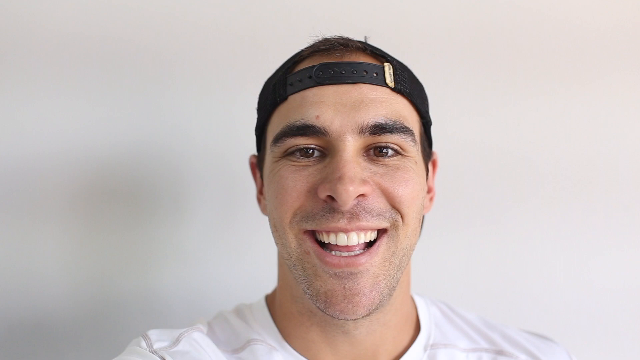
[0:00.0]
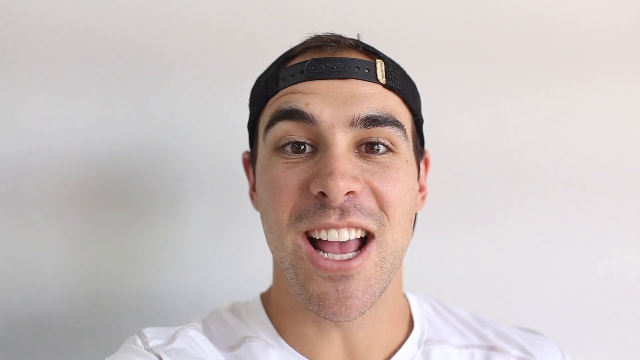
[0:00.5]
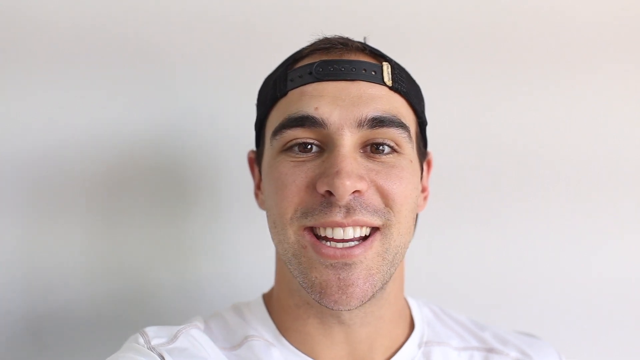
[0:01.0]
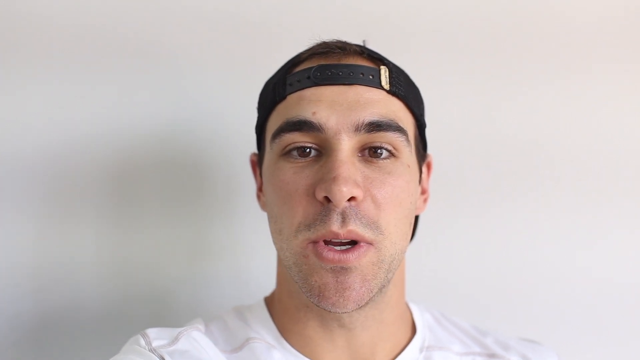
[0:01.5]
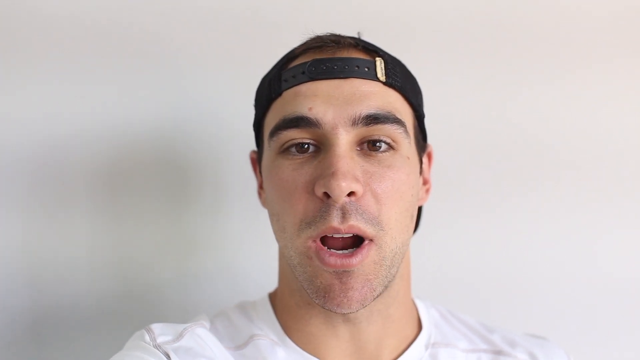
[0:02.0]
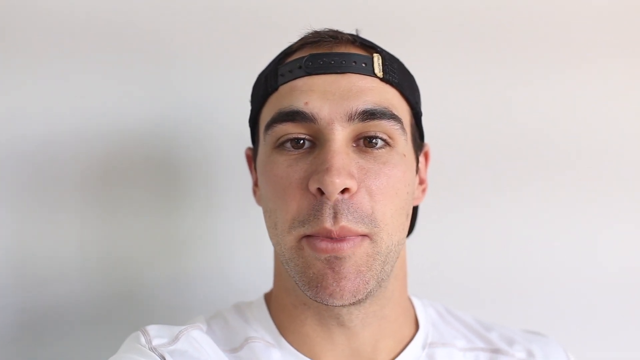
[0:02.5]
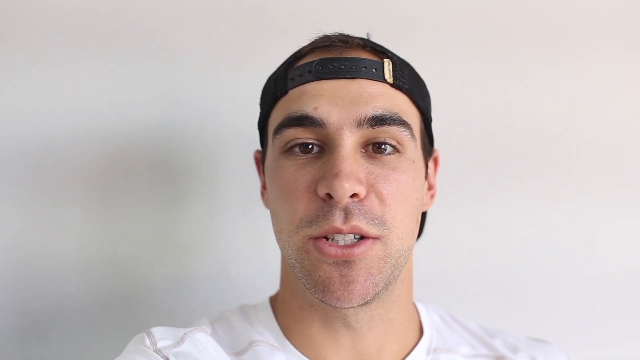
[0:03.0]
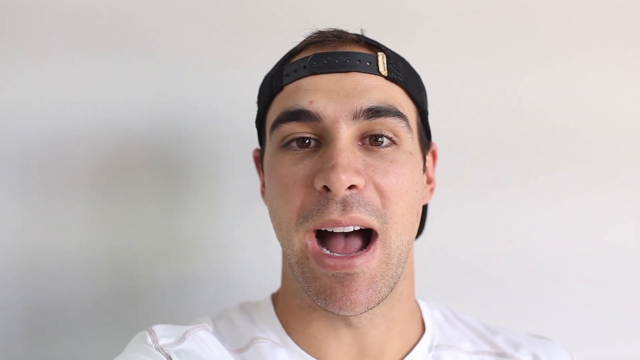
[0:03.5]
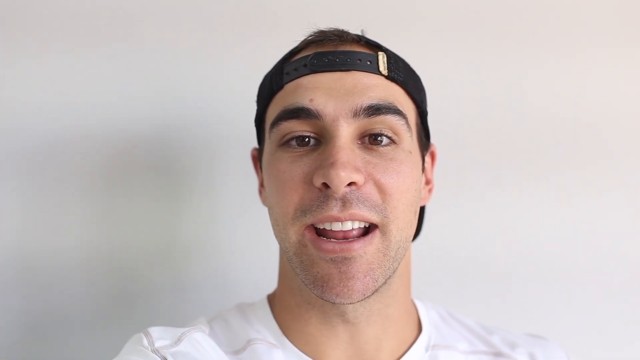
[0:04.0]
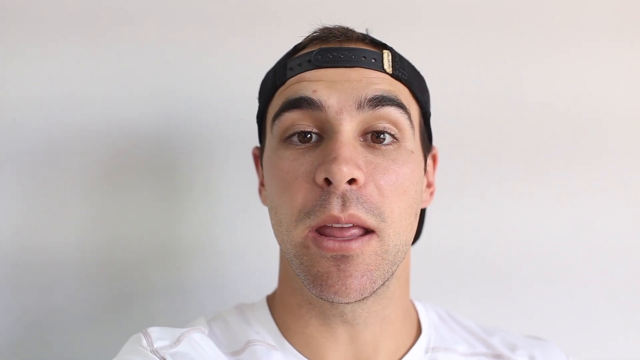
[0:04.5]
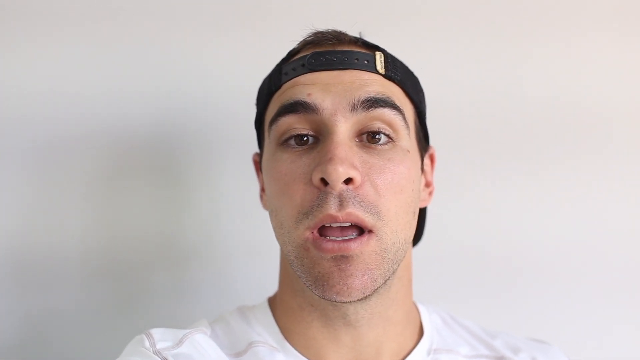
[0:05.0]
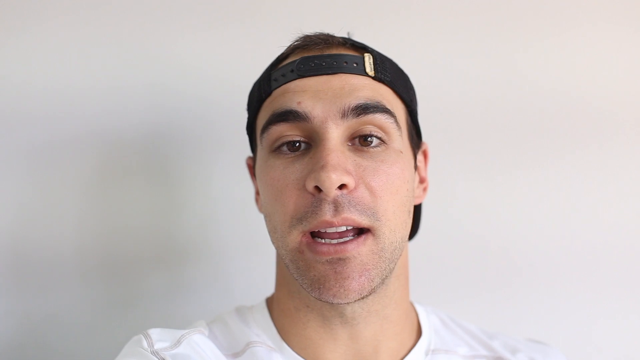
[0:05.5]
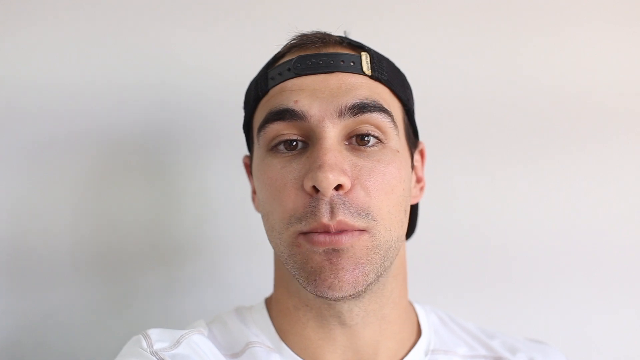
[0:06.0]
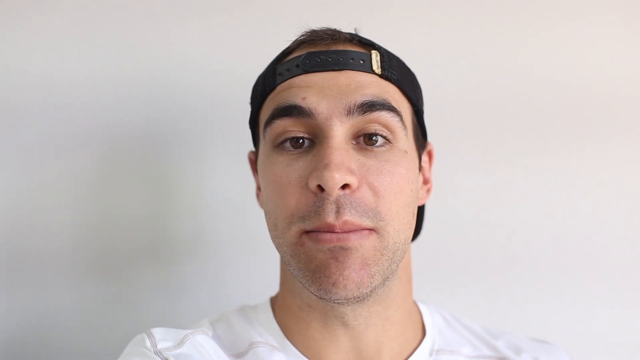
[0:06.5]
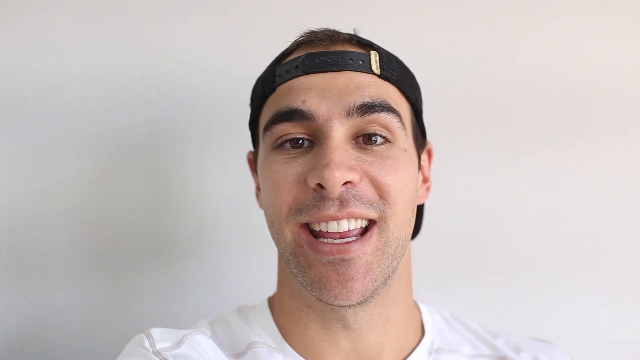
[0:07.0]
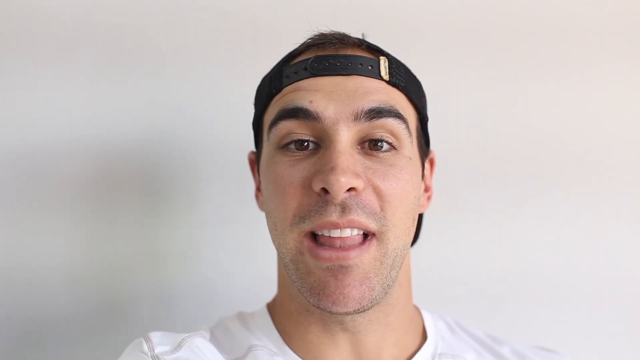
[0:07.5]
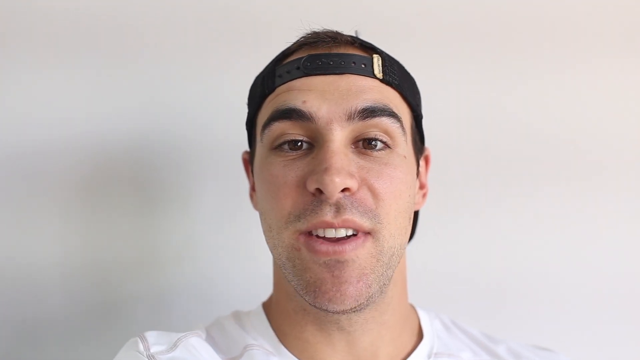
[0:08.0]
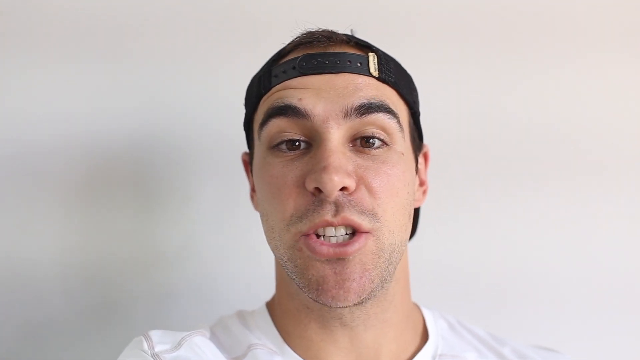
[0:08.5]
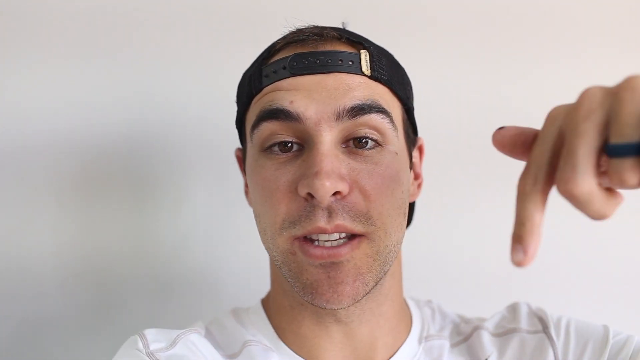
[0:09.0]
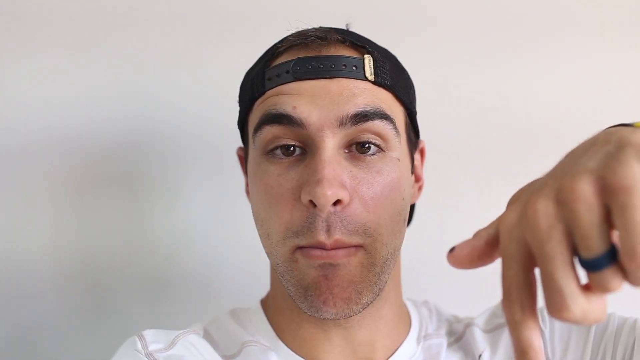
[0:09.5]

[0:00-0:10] A man appears against a plain white background in a selfie-style headshot, with the shoulders of his white t-shirt barely visible. He wears a black cap backwards on his head, has tan olive skin, dark eyes and some stubble on his beard. Positioned in the centre of the screen, he talks towards the camera, his mouth moving at quite a fast pace. He then brings his left hand into view and points his index finger downwards towards the floor.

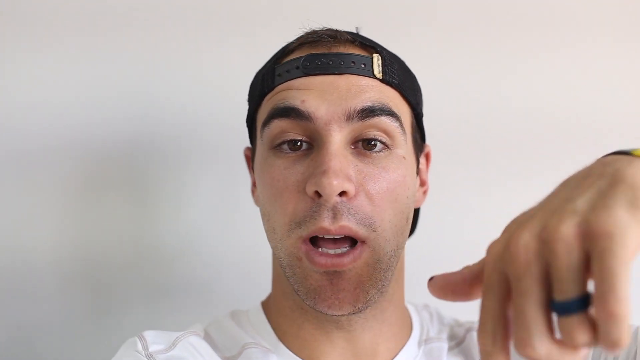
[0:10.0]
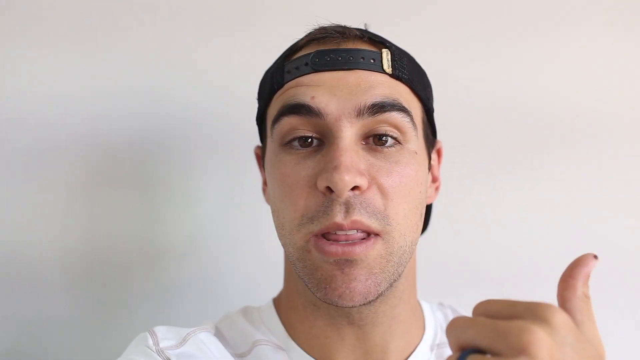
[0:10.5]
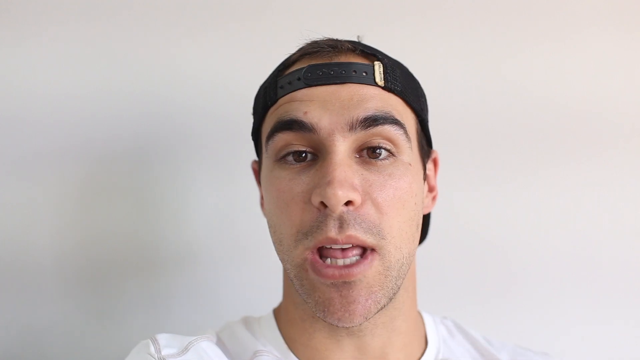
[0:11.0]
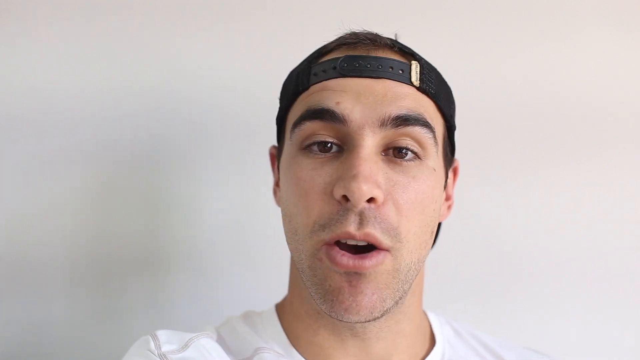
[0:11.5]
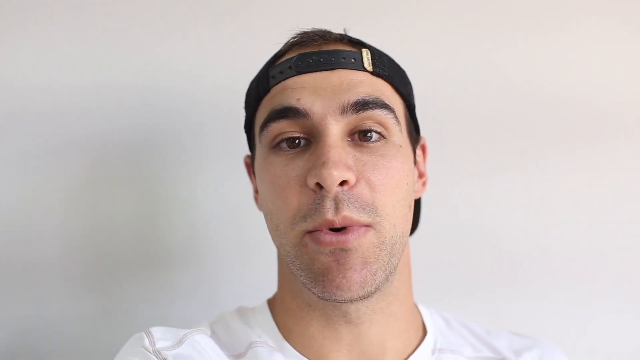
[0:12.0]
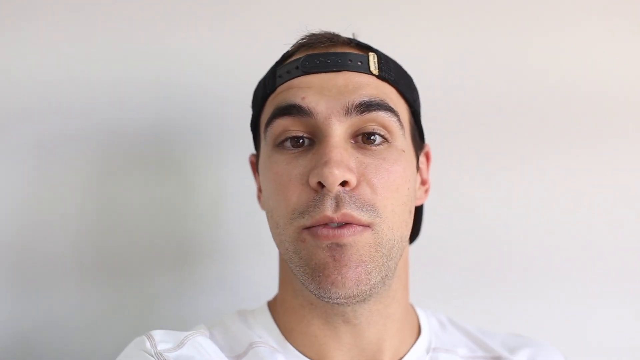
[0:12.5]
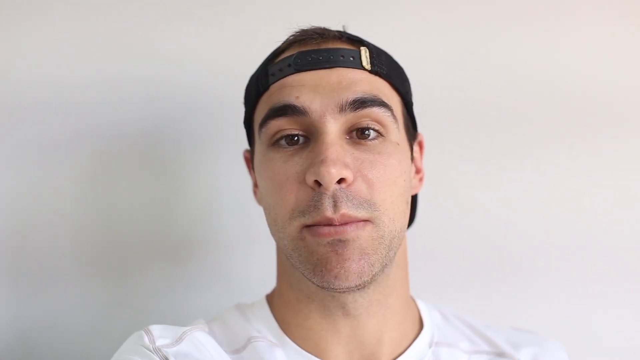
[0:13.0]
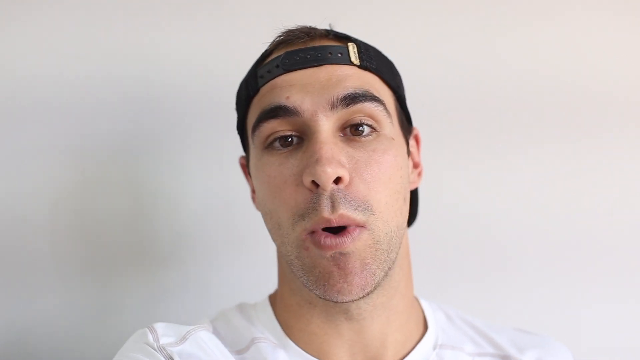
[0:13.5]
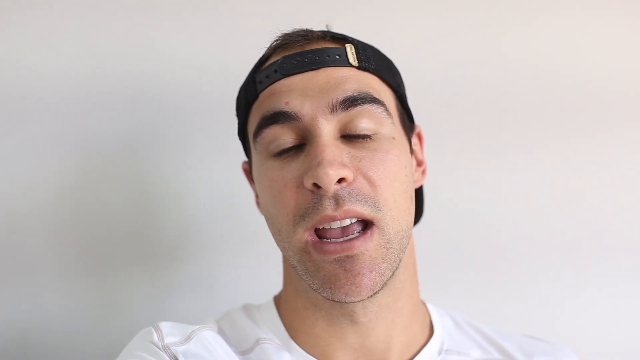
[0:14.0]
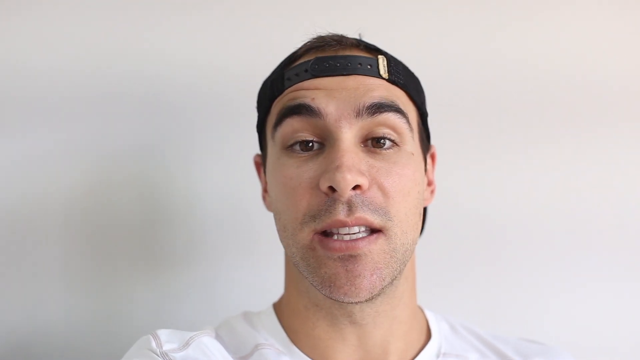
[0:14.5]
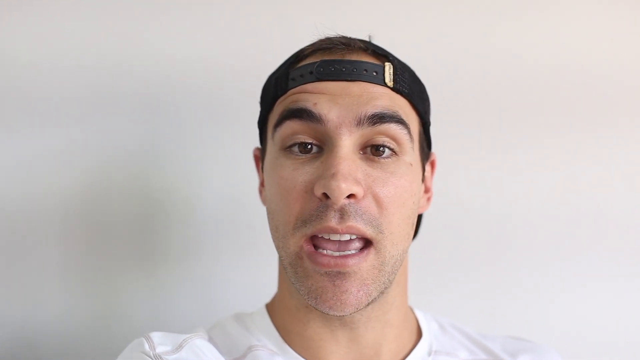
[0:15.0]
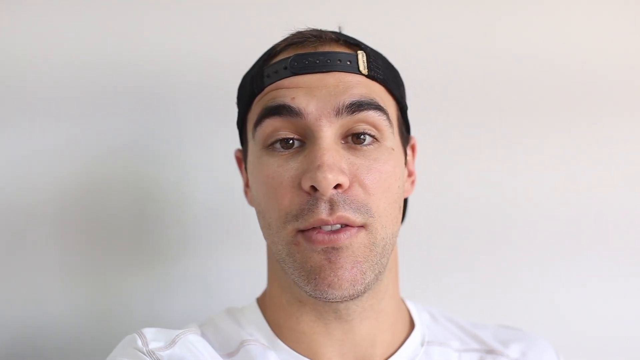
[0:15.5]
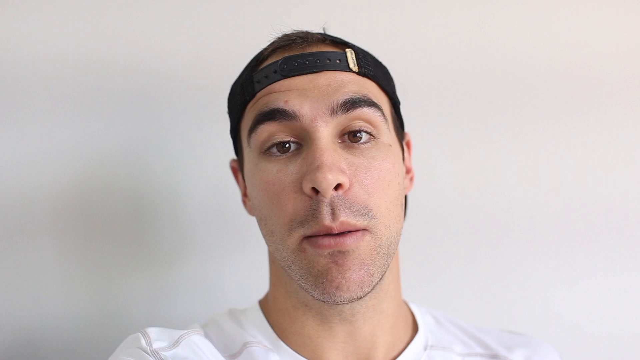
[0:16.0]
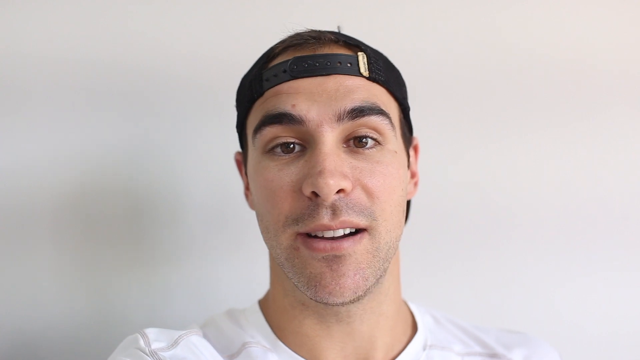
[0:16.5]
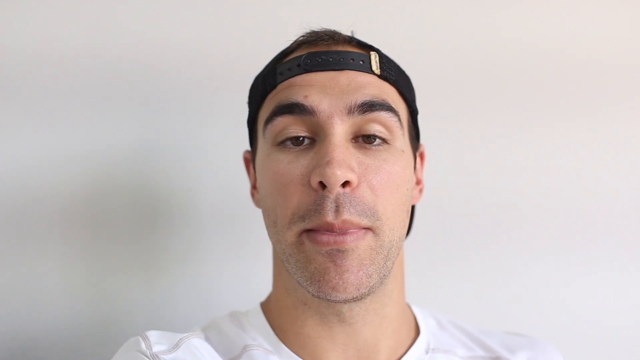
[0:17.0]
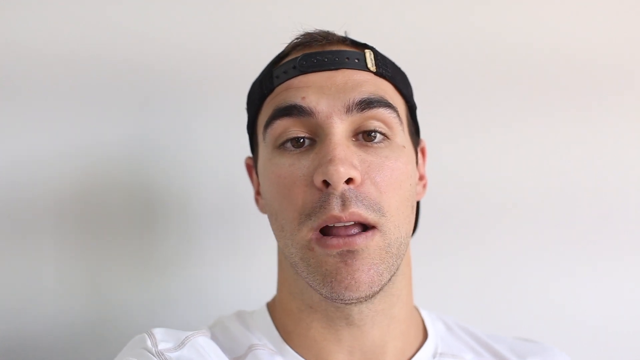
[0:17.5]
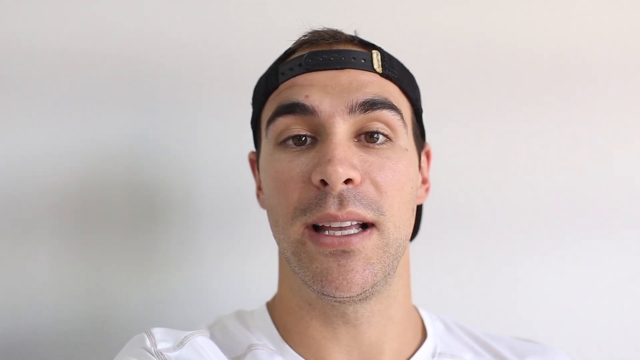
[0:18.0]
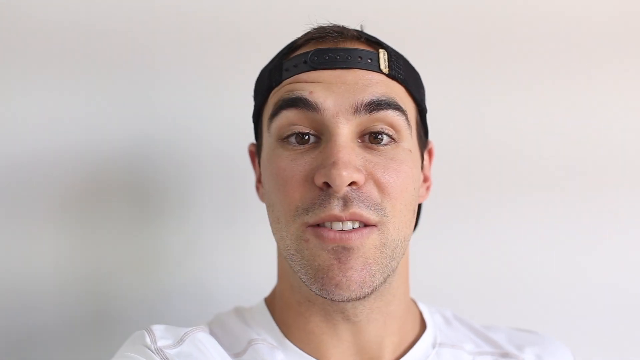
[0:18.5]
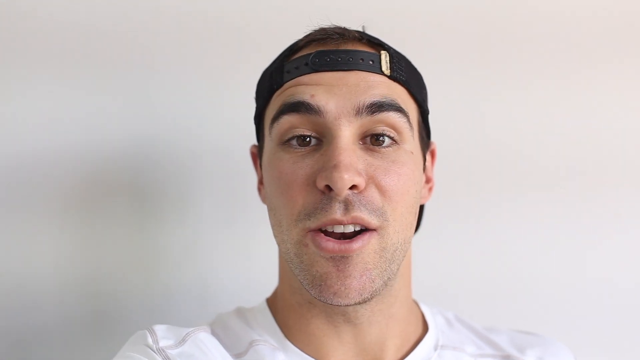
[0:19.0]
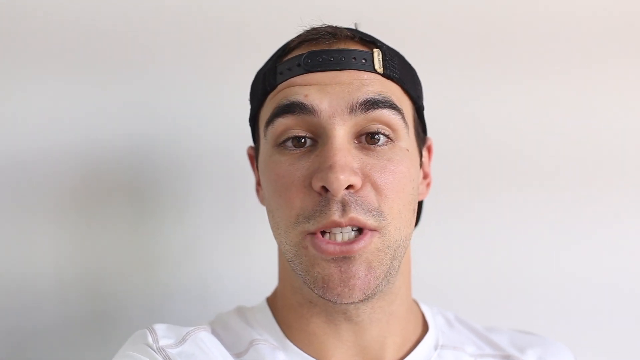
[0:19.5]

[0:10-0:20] The man, wearing a black baseball-style cap backwards, is in the centre of the screen against a plain white background, talking towards the camera. His left hand is visible in the bottom right-hand corner of the screen, and he brings it down out of view. His mouth keeps moving as he continues to talk, he looks directly at the camera, and his head tilts slightly from one side to the other. Only his head and neck are visible; the rest of his body is not shown, so his facial movements as he speaks are the only activity.